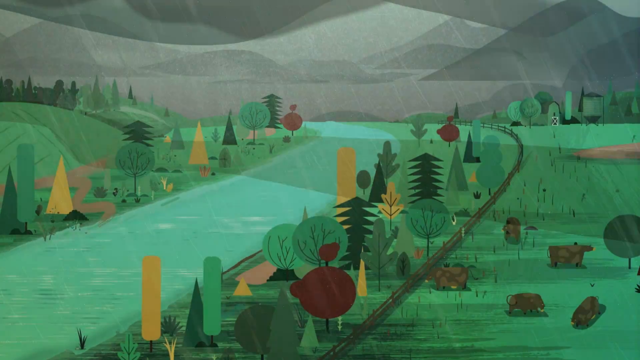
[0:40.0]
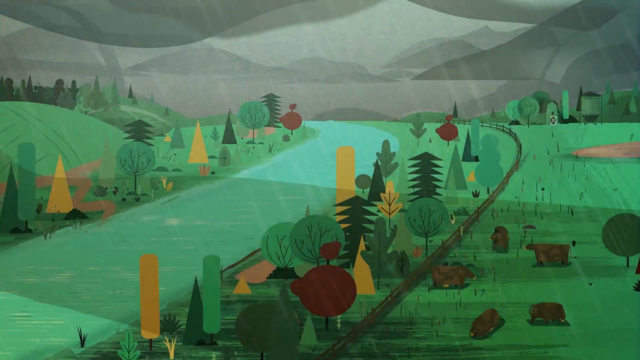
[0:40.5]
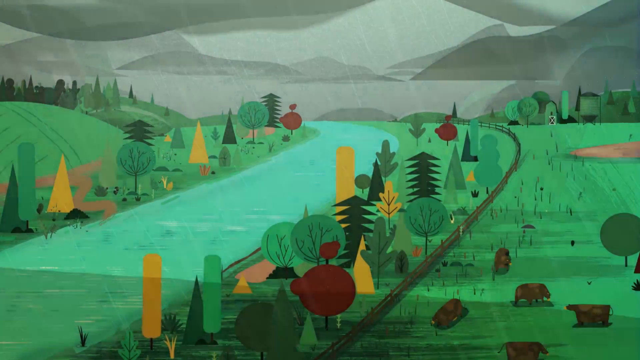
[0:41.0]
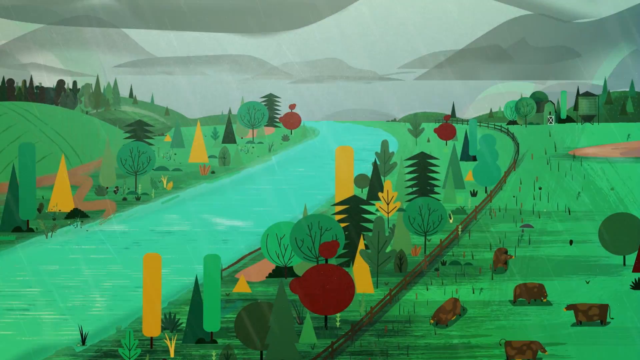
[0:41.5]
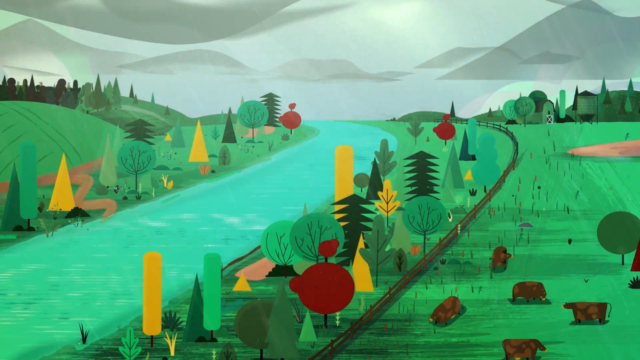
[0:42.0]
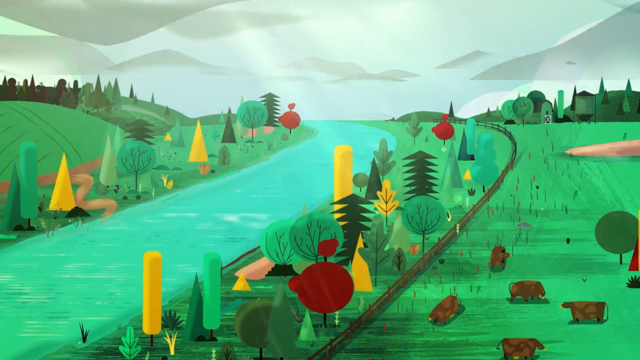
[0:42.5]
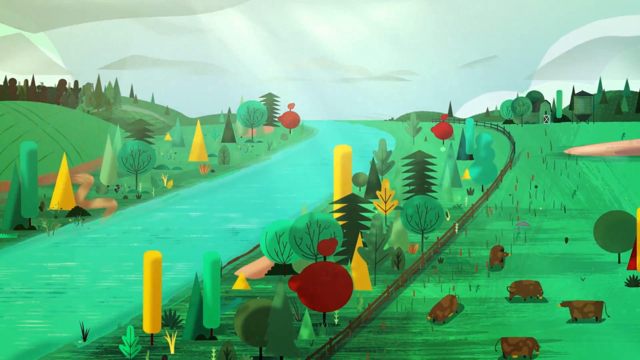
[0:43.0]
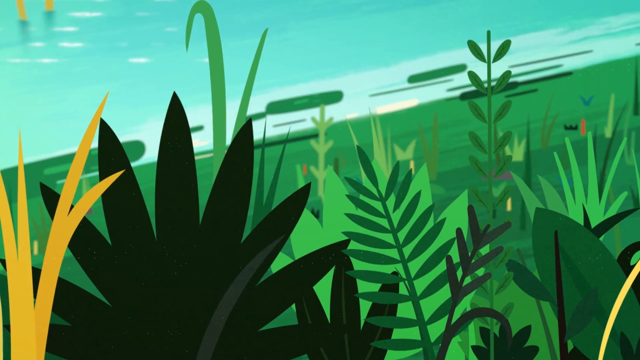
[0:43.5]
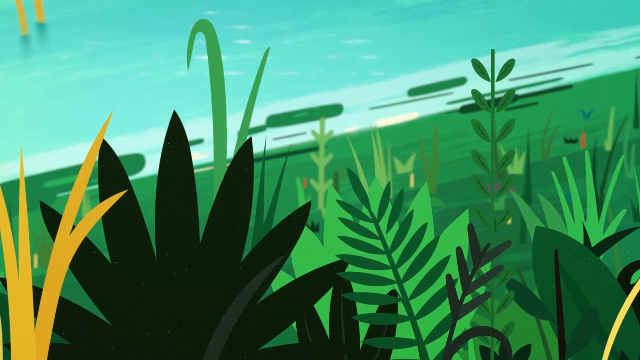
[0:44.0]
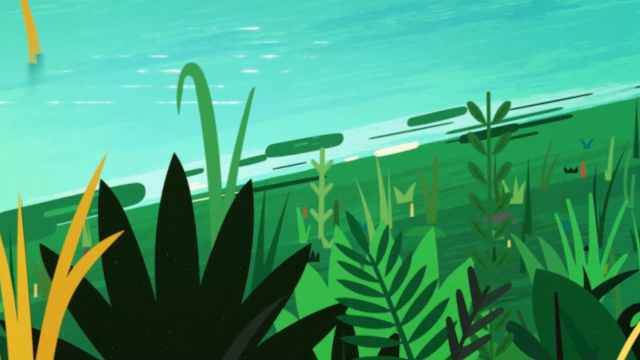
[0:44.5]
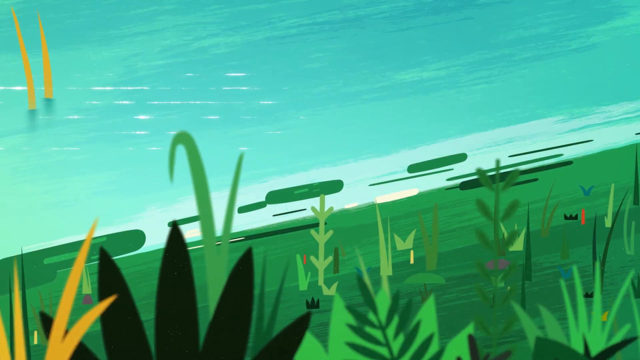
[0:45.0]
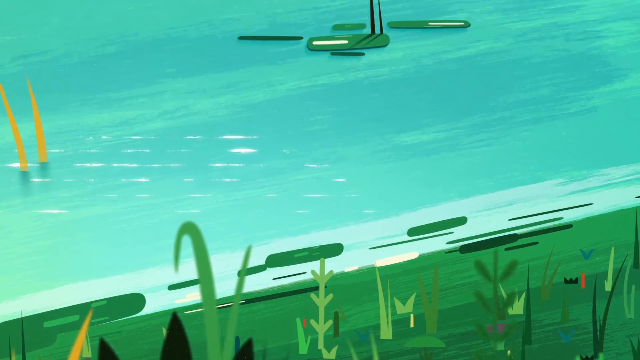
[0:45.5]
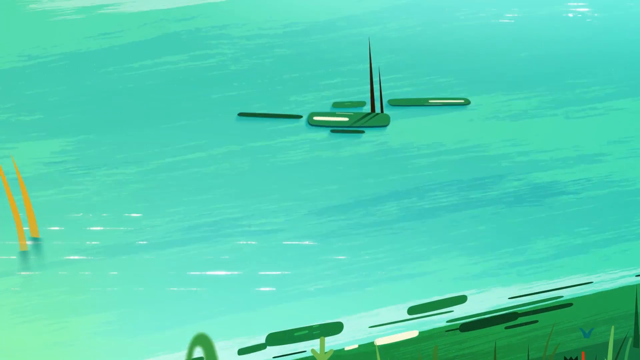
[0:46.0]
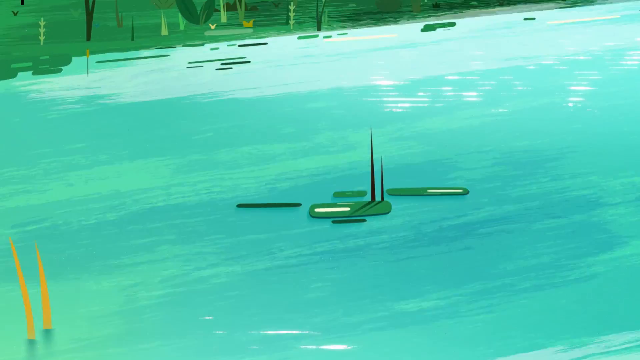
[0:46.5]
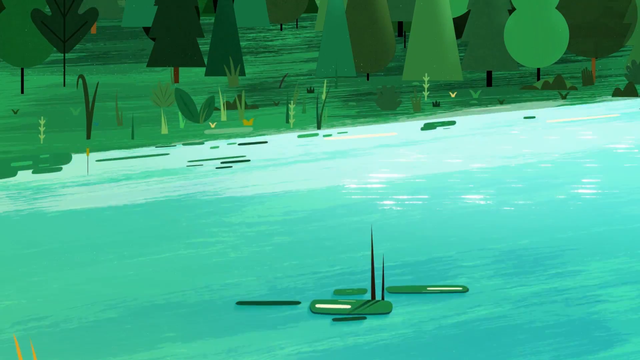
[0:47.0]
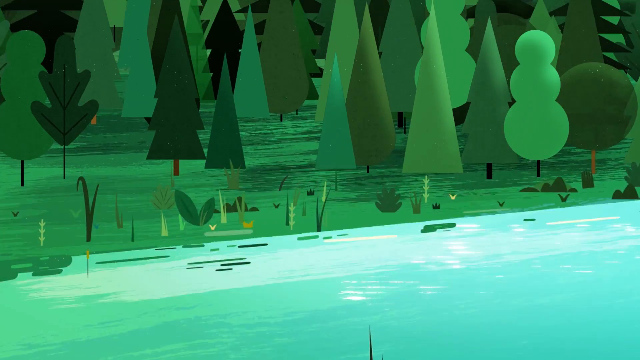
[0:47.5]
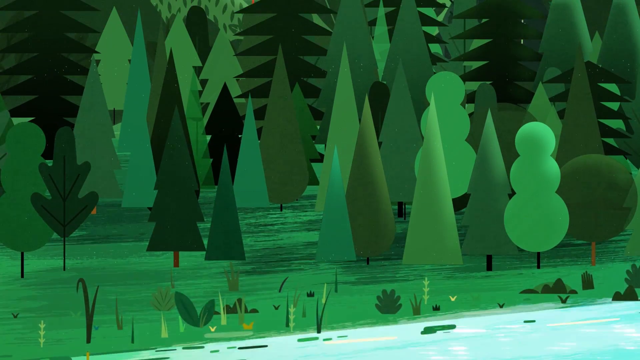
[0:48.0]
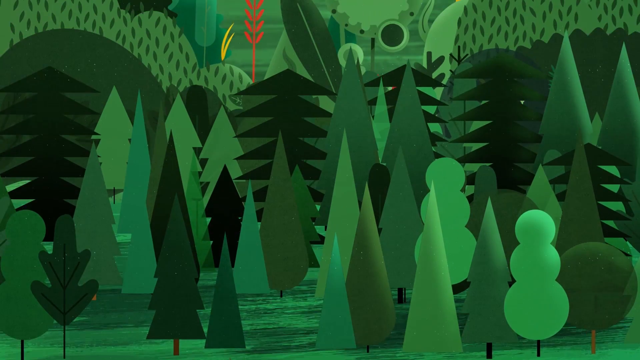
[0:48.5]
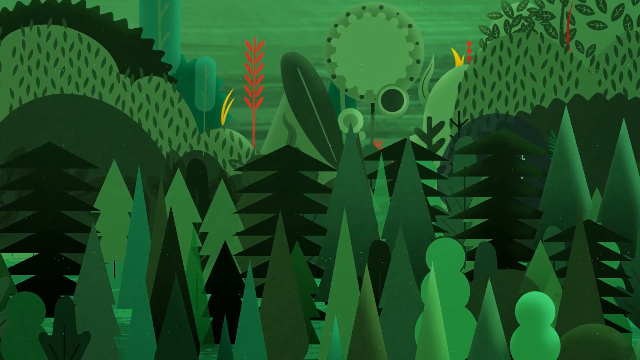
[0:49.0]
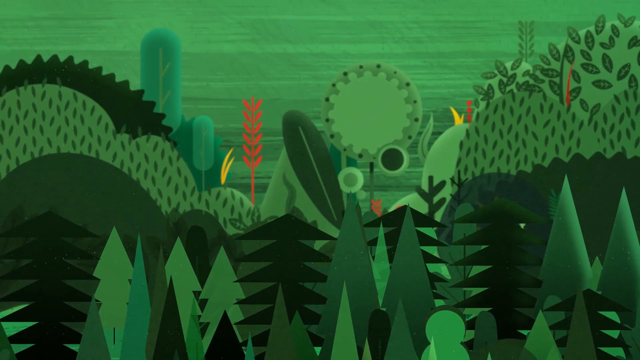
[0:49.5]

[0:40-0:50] The sun comes out and the gray clouds part. The rain stops, and there are new trees and plants on either side of the river area. The view zooms in on some of the plants, which are rustling in the wind, then pans up to show the water, with a bunch of trees and some colorful plants on the other side. The scene shows the result of the rain: new plants grown in and the sun coming out.